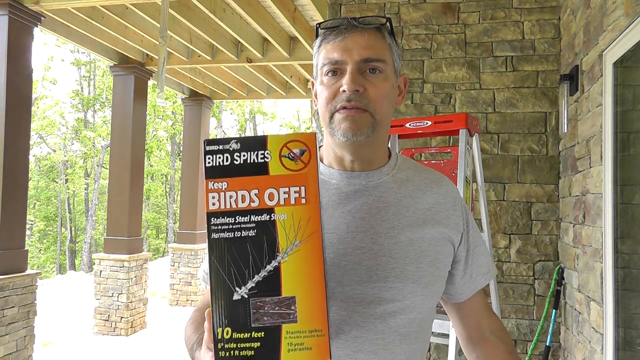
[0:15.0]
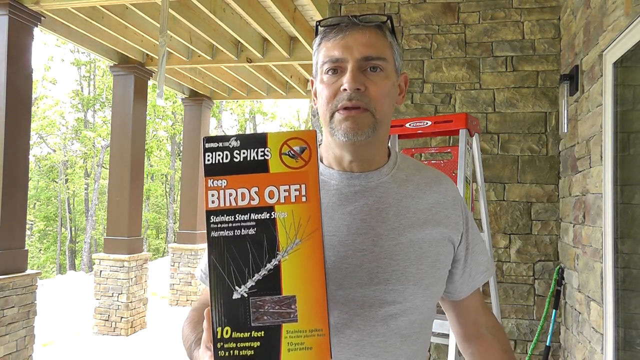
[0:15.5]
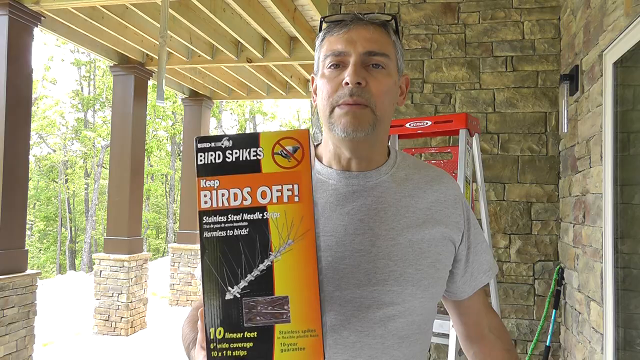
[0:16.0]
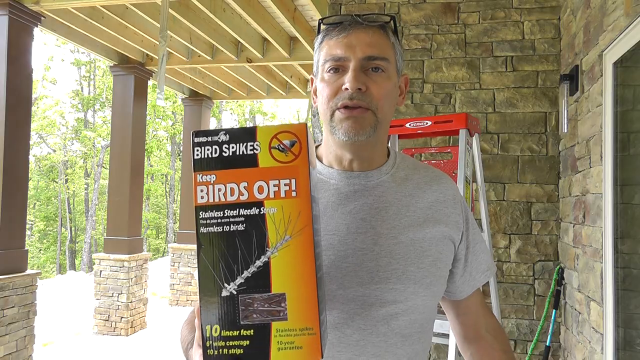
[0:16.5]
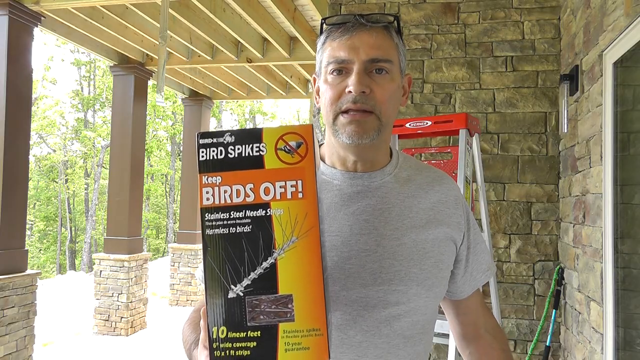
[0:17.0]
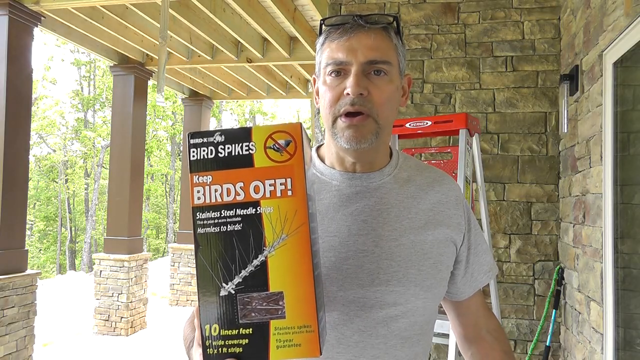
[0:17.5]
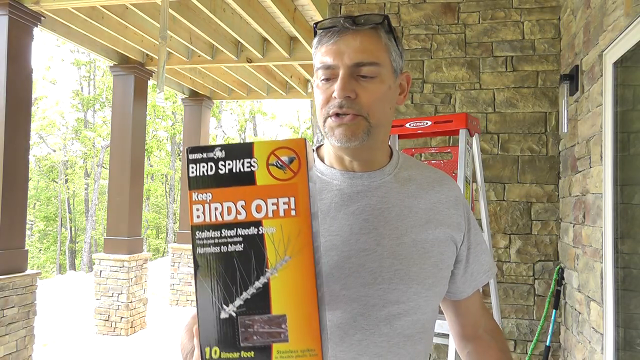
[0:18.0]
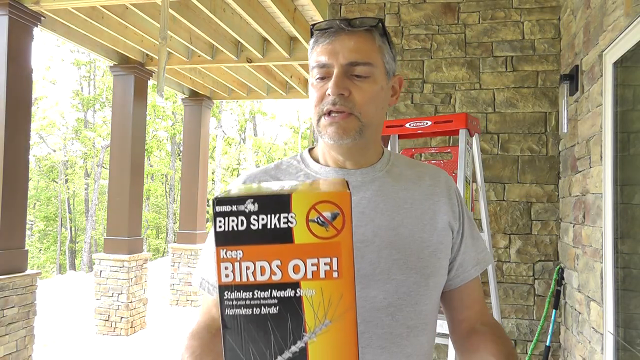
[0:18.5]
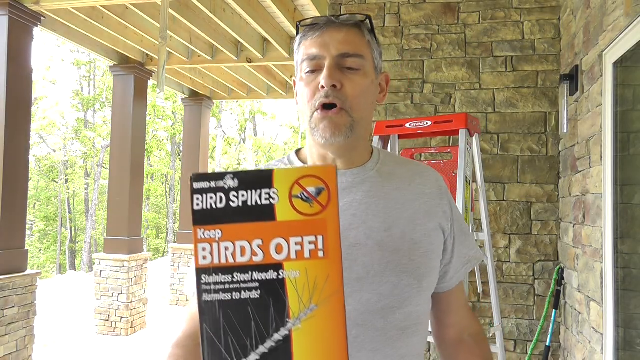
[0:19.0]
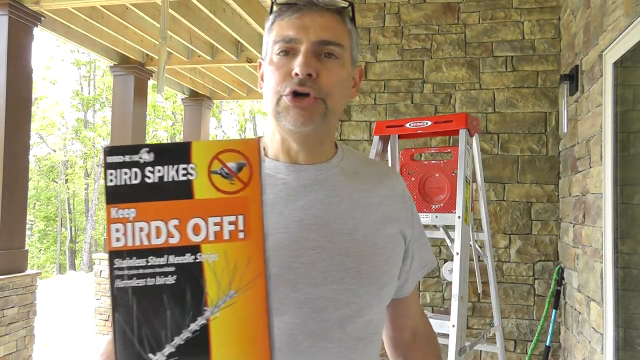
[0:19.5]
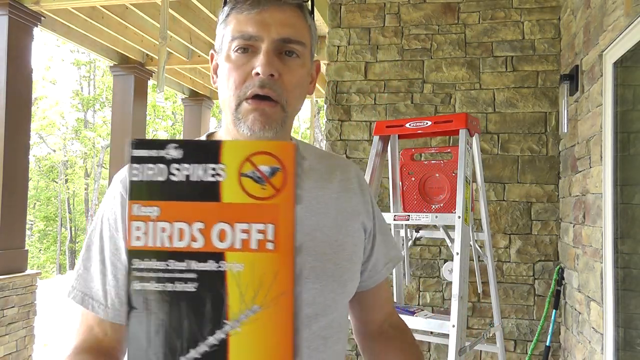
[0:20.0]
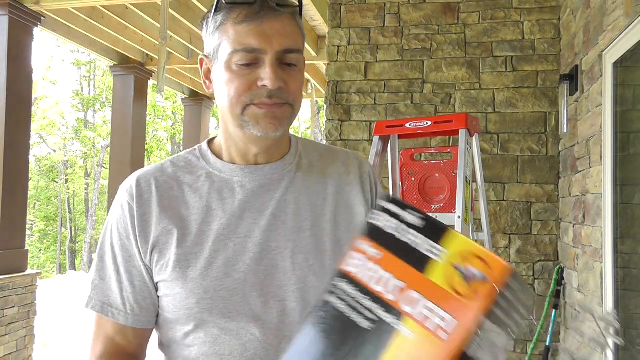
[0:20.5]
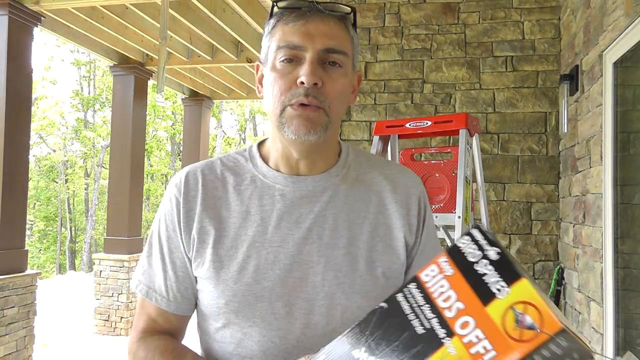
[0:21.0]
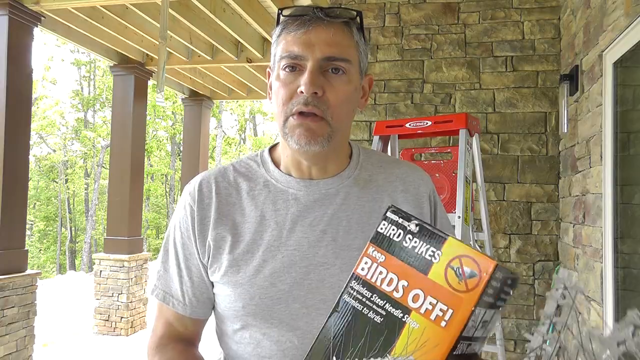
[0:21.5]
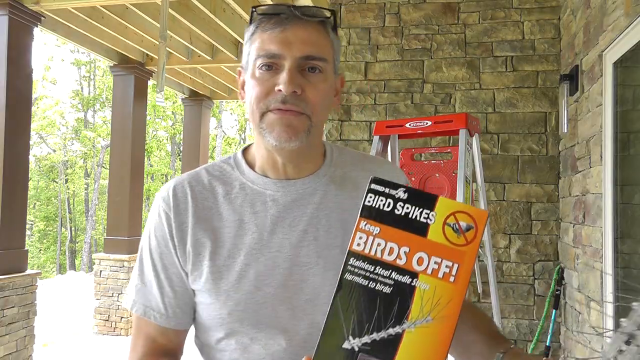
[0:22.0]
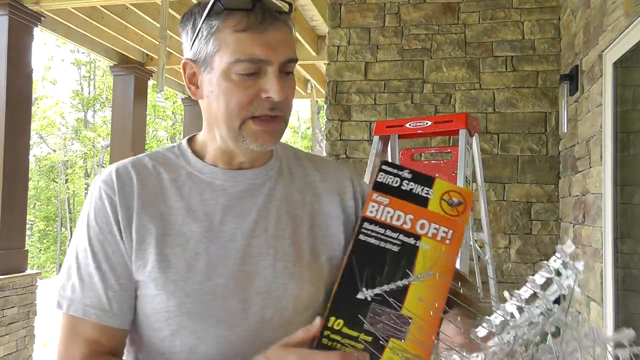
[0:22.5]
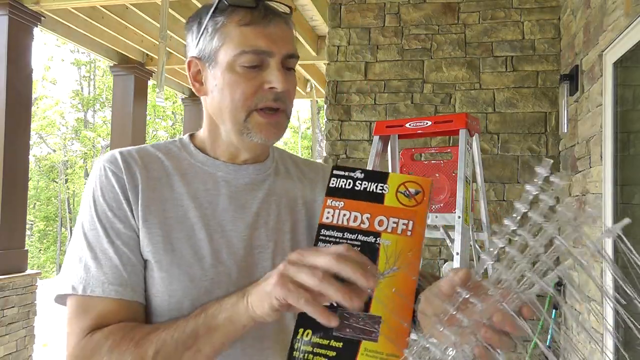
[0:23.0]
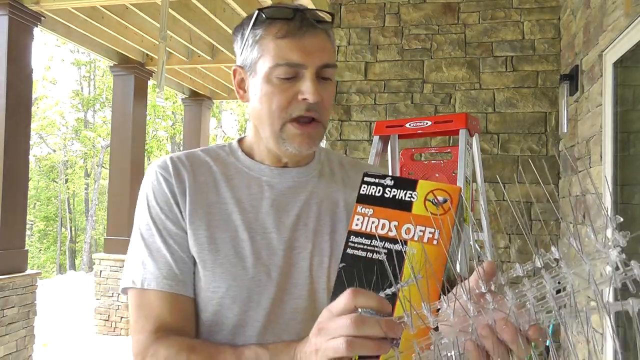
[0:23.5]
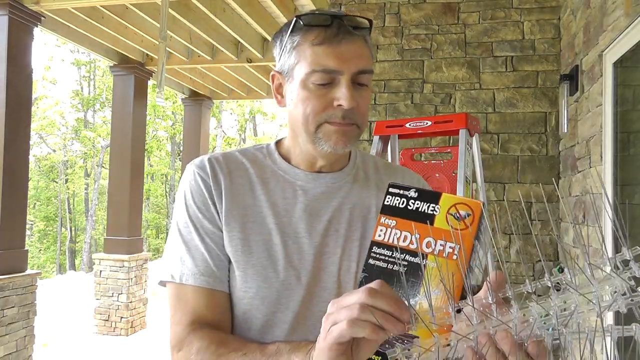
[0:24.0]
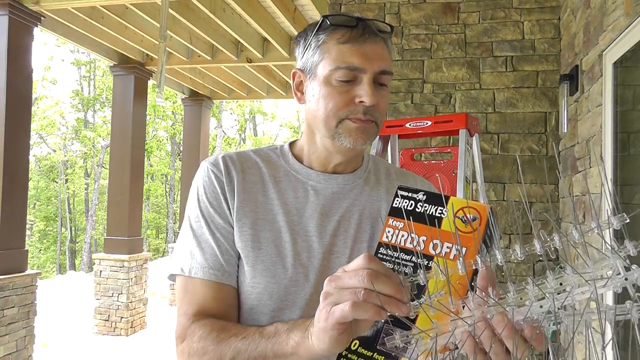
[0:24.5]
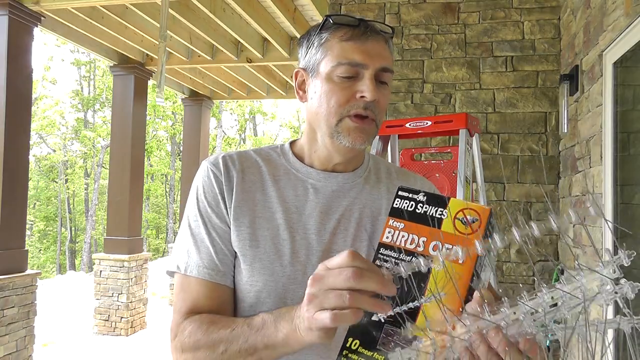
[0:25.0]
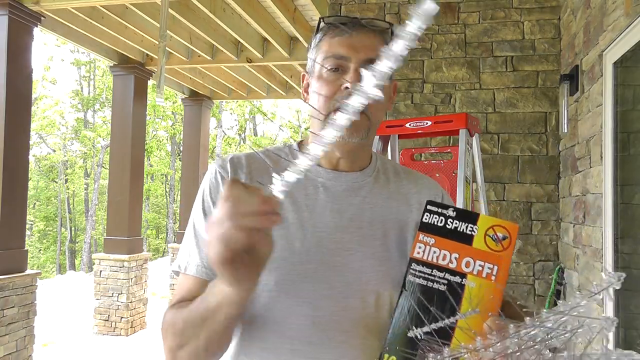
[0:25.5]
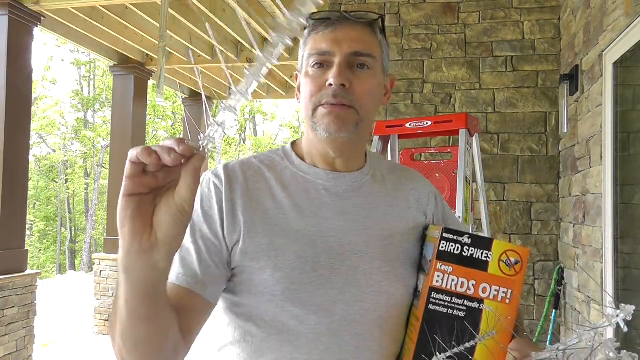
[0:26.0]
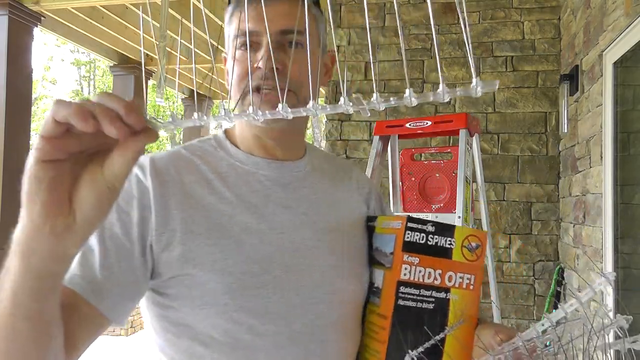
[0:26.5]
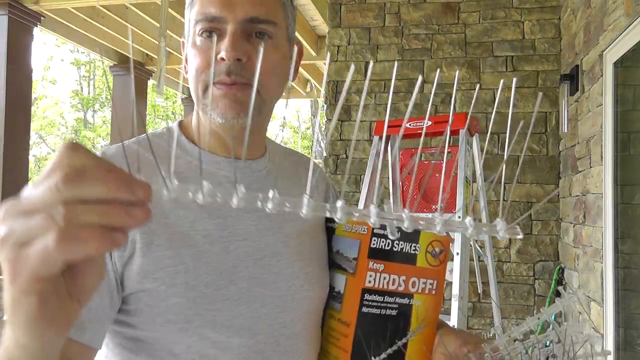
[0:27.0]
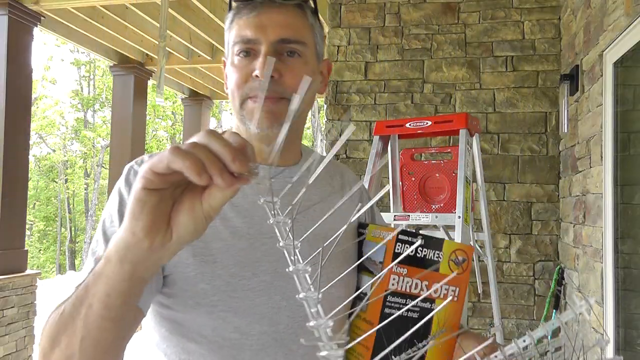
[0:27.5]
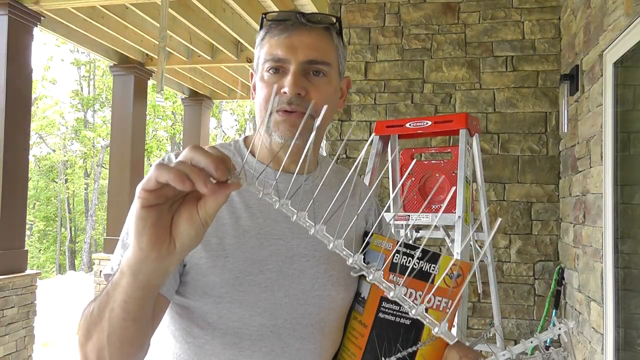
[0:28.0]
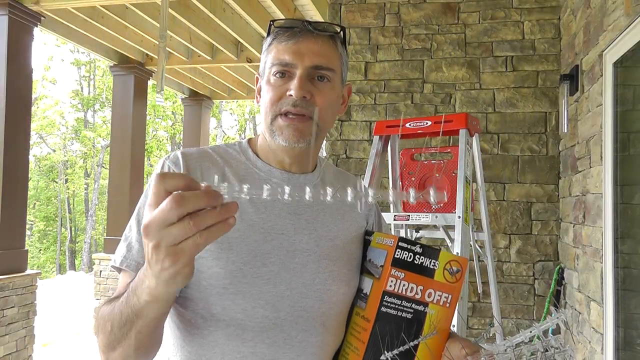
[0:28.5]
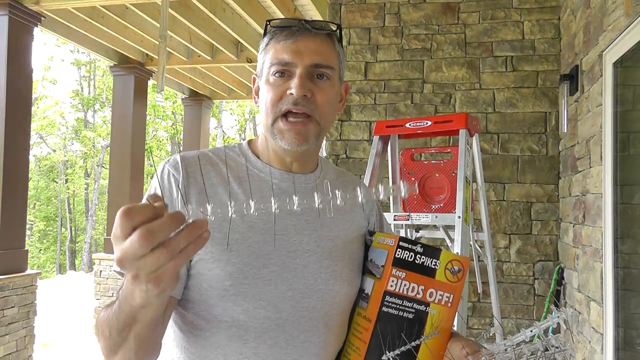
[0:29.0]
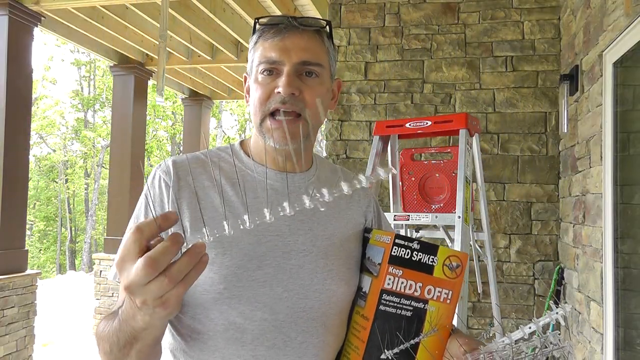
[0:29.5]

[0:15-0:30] A man standing on his front porch holds a box of a product called Birds Off in his right hand, and in his left hand he appears to hold pieces already taken out of the box. He swaps the product box and the product between his two hands, then holds up a very spiky device: a flexible plastic base with several metal spikes, probably 20 to 30, sticking out of each little strip. An aluminum ladder with a red plastic paint tray and a plastic top is in the background behind him. He is standing underneath a stone porch, and on the left-hand side three columns painted dark brown hold up the deck above the porch.